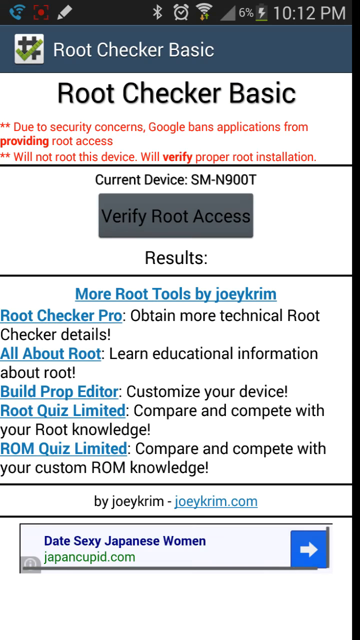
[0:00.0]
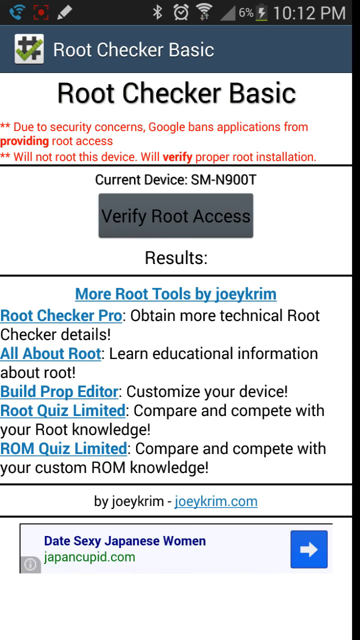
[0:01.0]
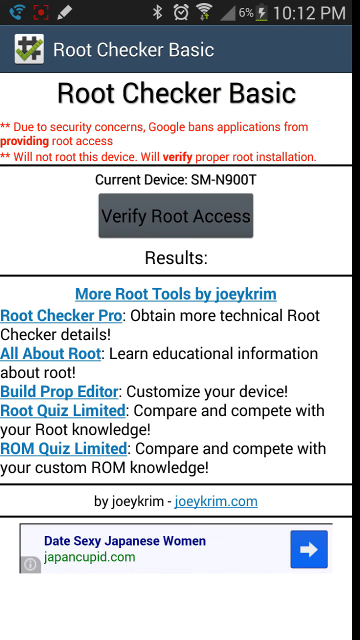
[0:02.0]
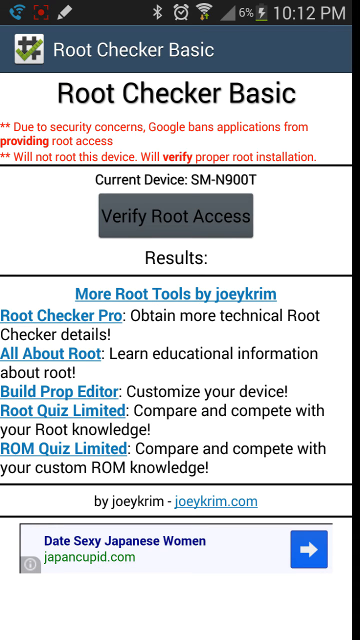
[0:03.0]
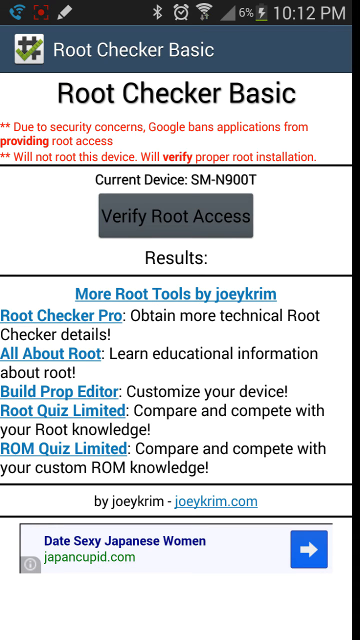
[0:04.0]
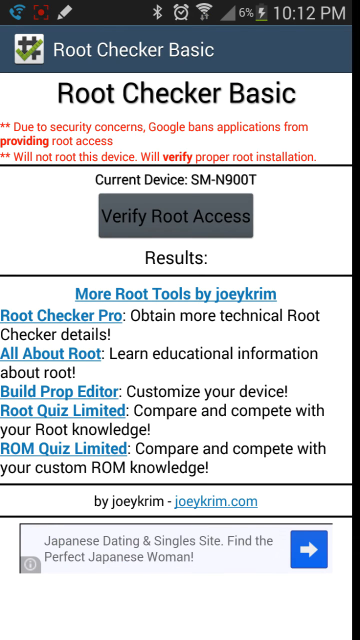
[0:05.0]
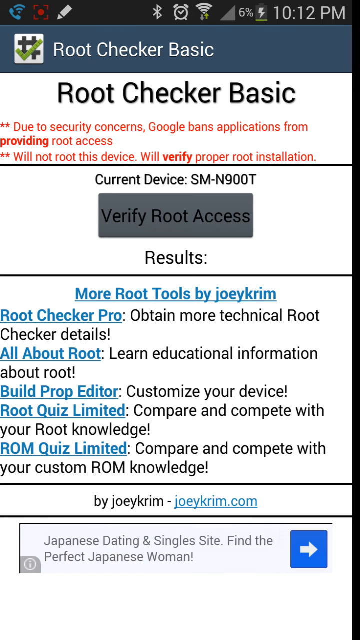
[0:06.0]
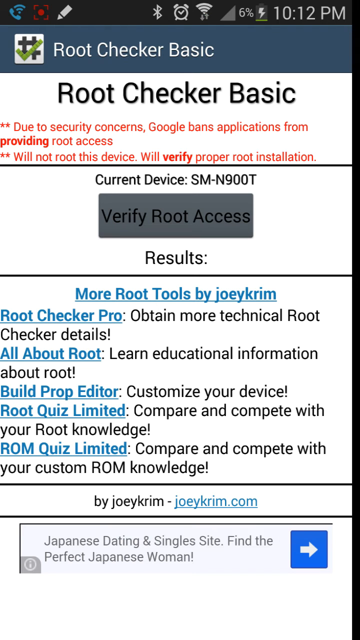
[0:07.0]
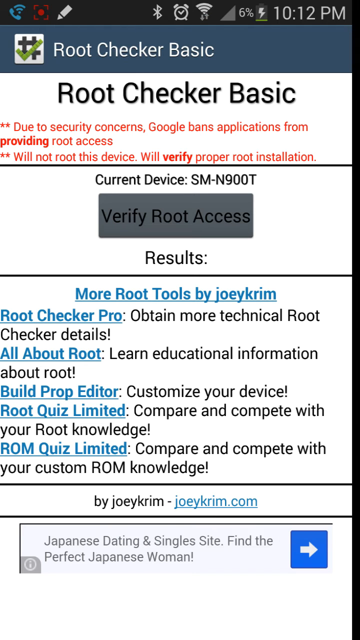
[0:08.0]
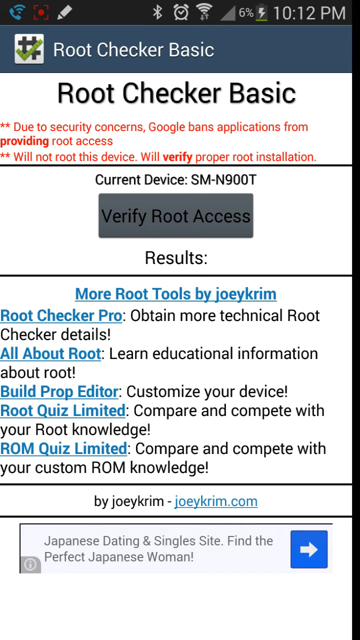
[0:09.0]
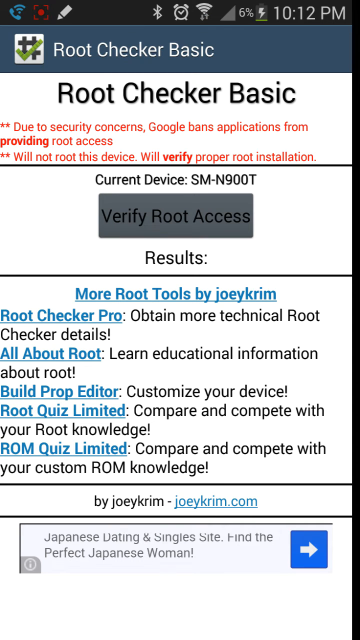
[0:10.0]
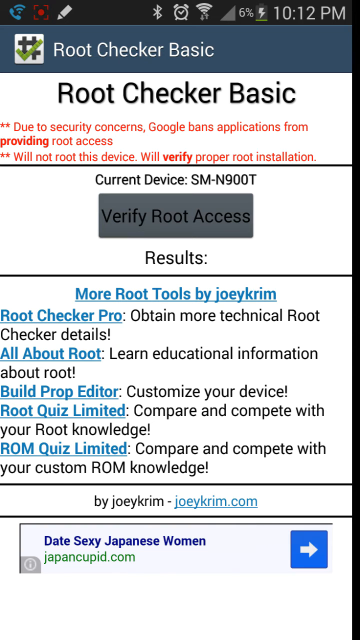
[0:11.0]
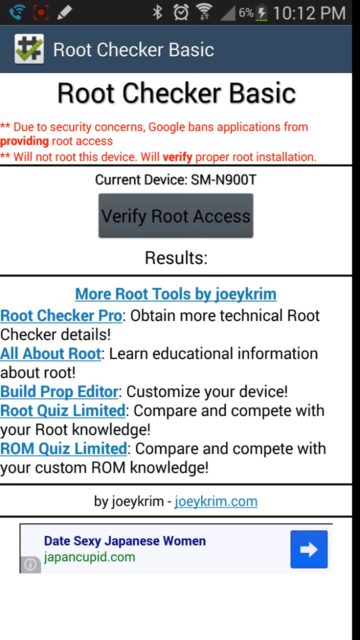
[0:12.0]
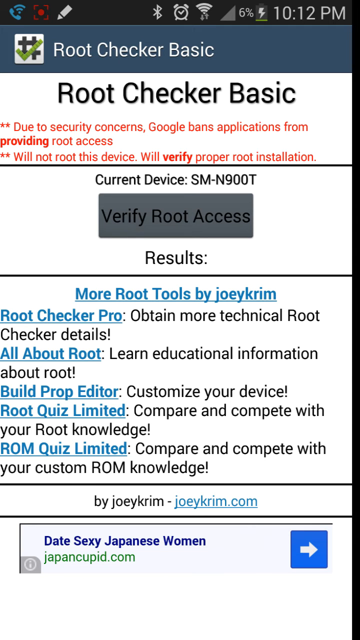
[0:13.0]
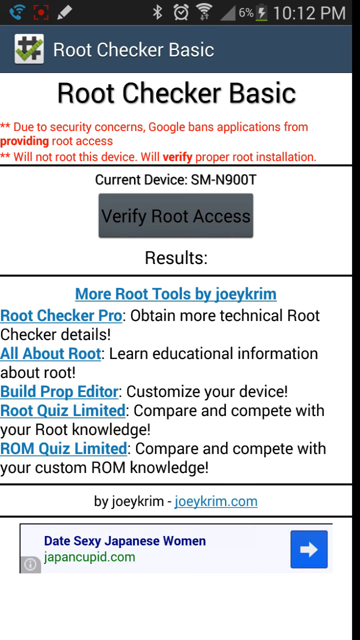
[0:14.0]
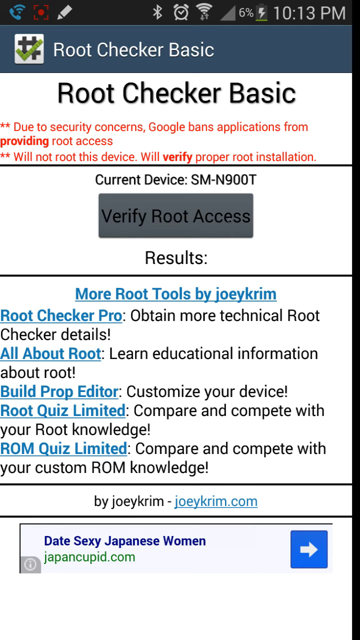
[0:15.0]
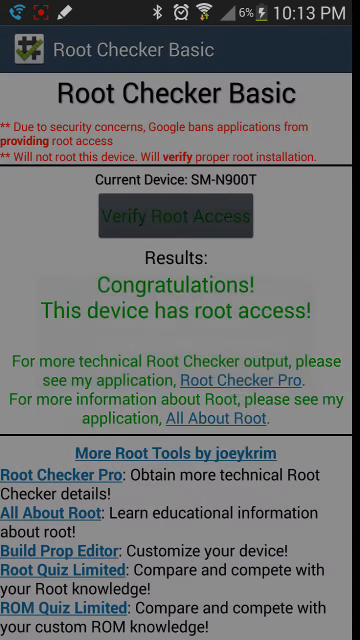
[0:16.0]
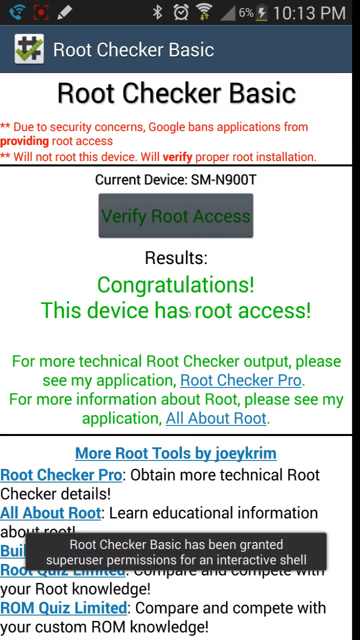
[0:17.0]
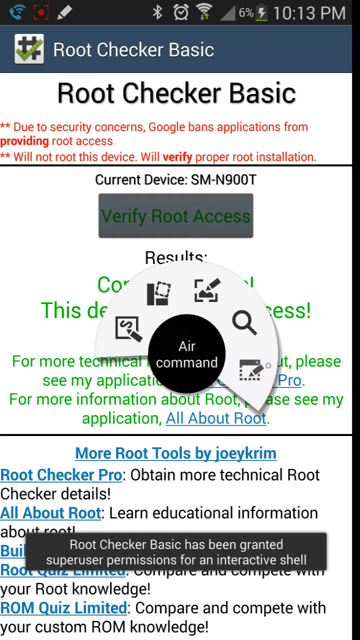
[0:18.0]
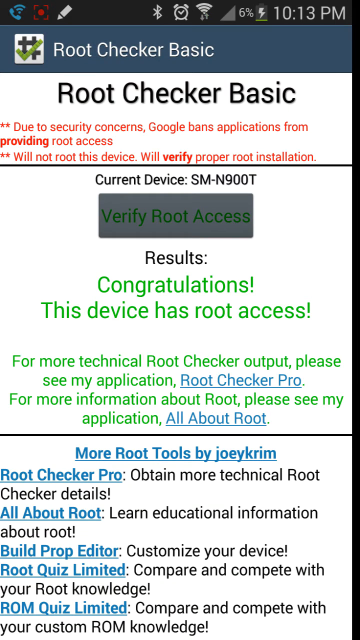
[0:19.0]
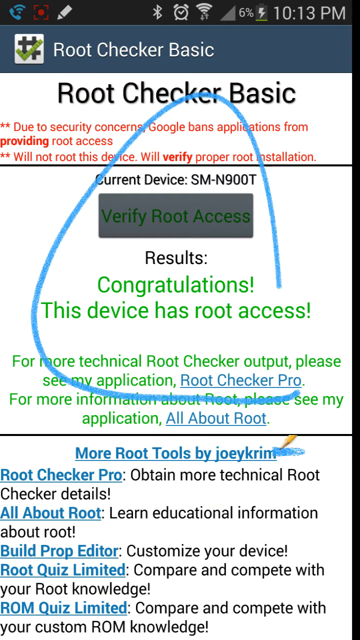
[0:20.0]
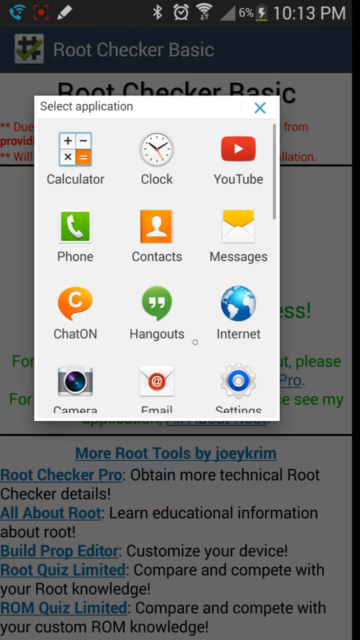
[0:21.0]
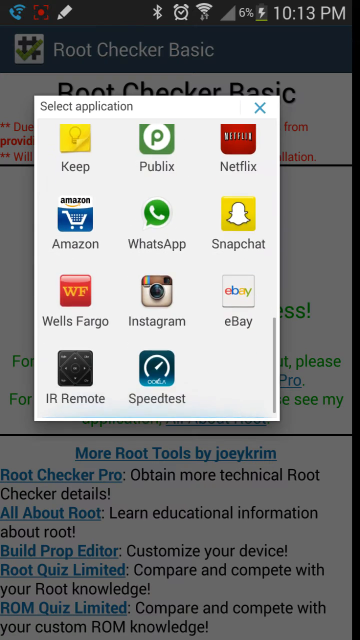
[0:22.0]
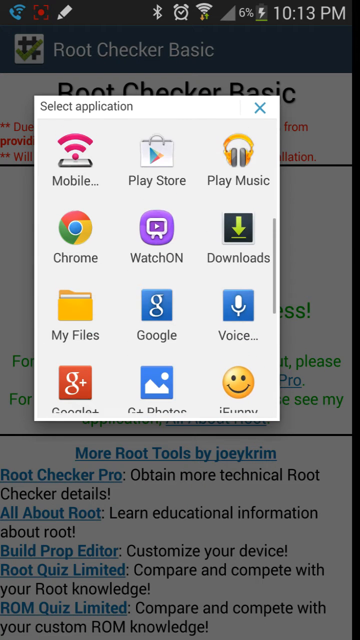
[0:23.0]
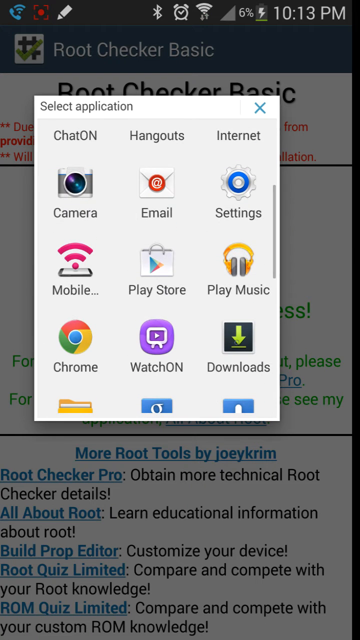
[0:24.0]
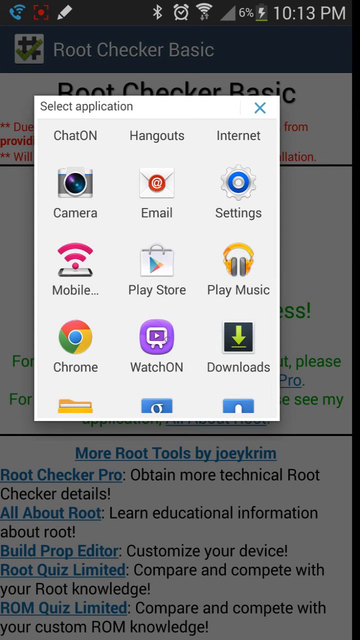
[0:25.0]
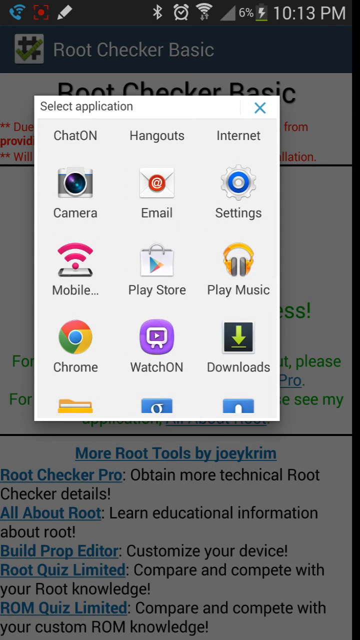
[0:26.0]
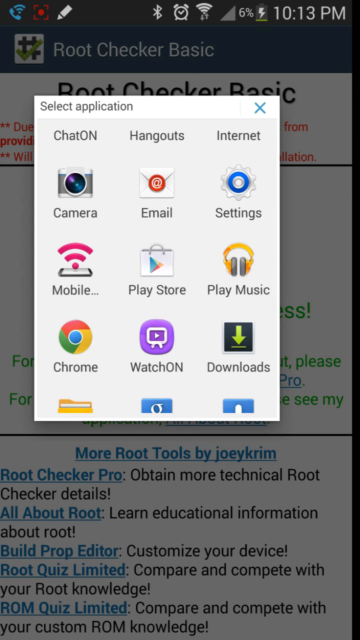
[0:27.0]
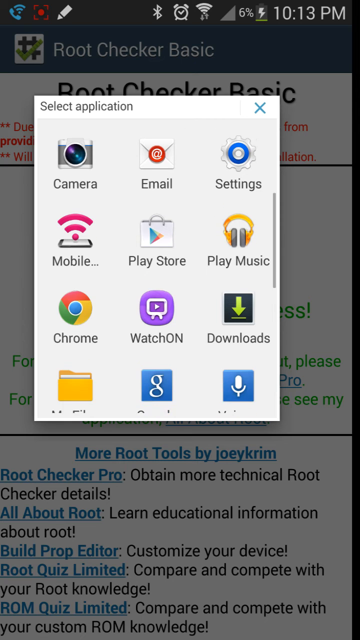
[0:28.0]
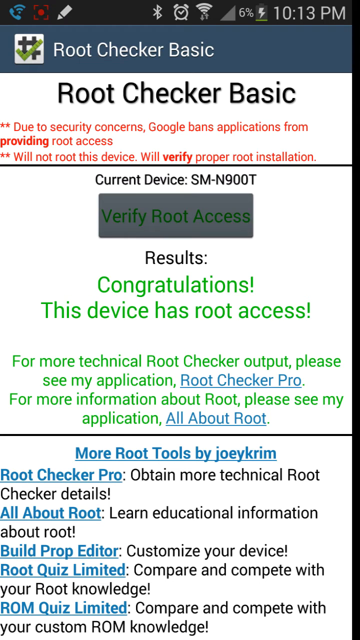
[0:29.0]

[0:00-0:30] An application is open on a cell phone that shows 6% battery and a time of 10:12 pm. The app seems to be called Root Checker Basics. It is very simple and badly designed, looking like a web page from the 90s. Text in red reads "Due to security concerns, Google bans applications from providing root access. Will not root this device. Will verify proper root installation." Below that is what is possibly an inaccessible button, and a section labeled "results" with the lines "Root Quiz Limited" and "ROM Quiz Limited." Further down is a link to the page of the app's creator, called Joey Cream, and a section for ads. The user seems to tap the Verify Root Access button, which works even though its black and gray color makes it look inaccessible. A message then appears under Results: "Congratulations! This device has root access."